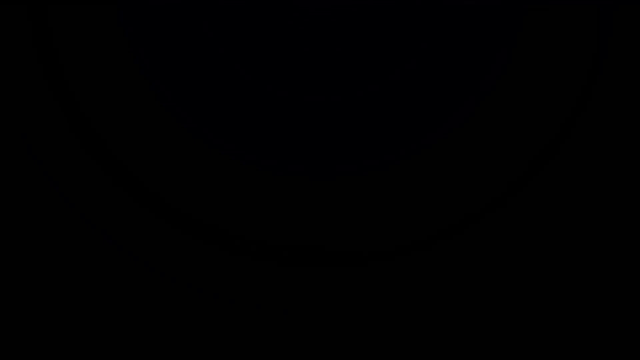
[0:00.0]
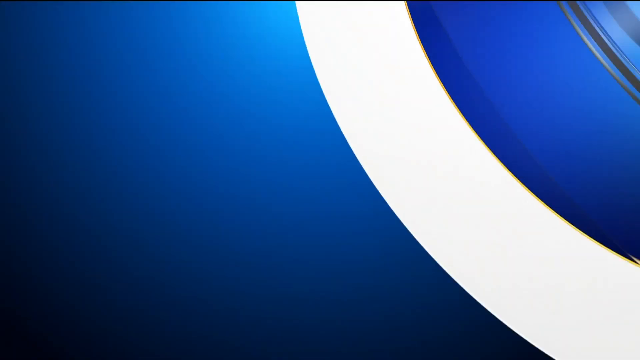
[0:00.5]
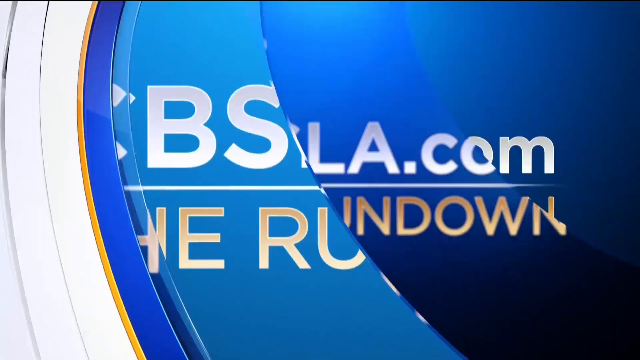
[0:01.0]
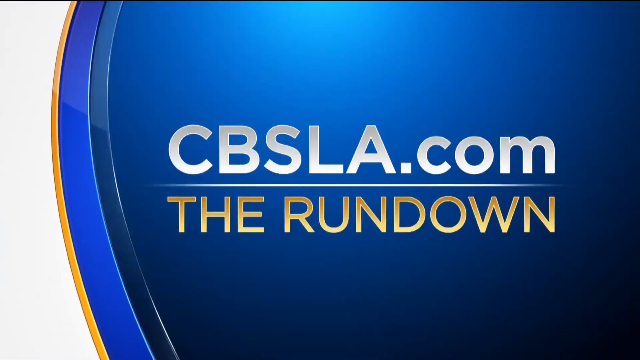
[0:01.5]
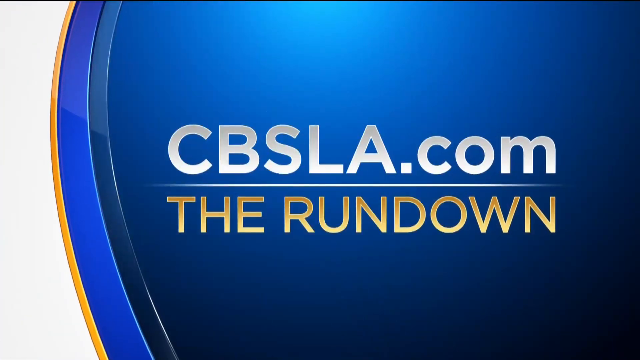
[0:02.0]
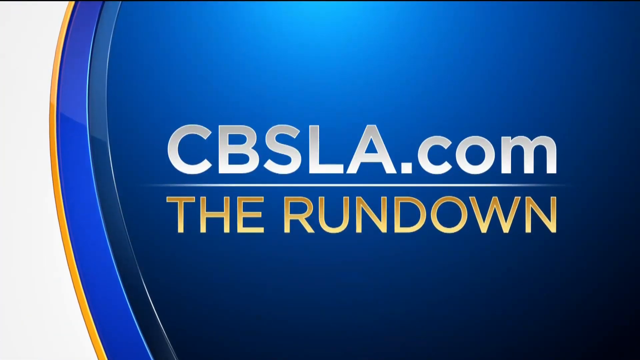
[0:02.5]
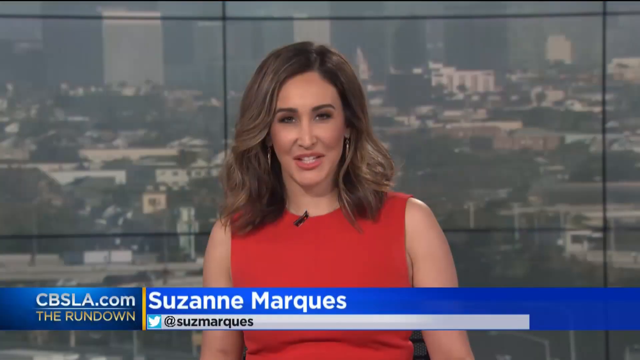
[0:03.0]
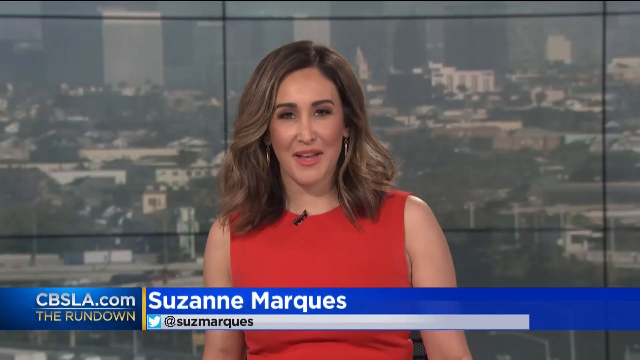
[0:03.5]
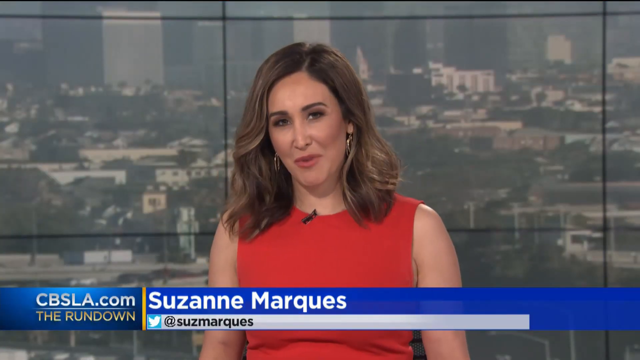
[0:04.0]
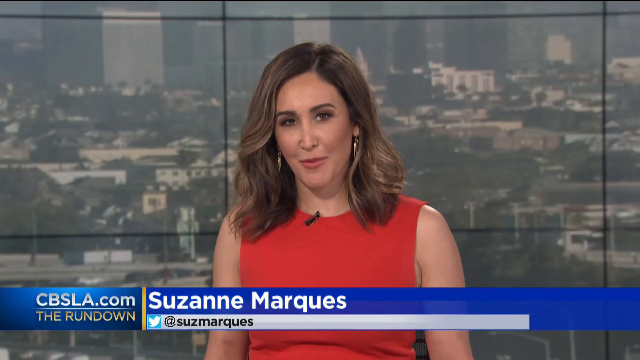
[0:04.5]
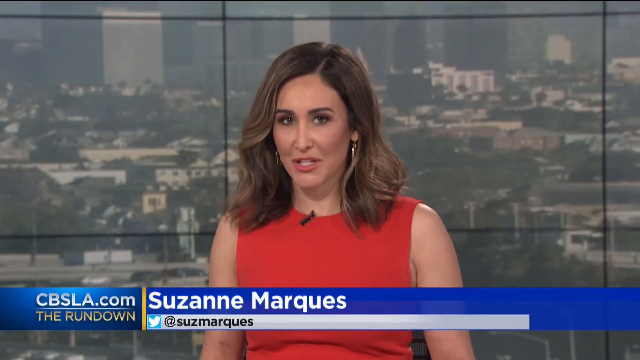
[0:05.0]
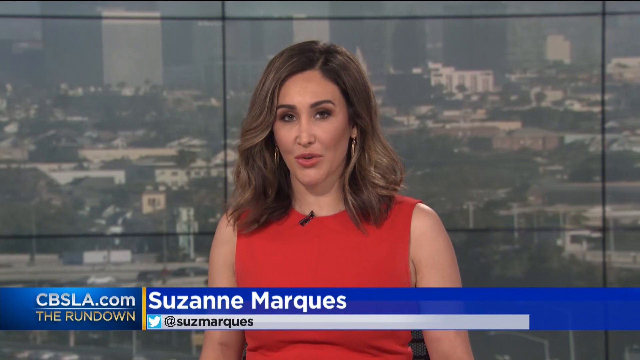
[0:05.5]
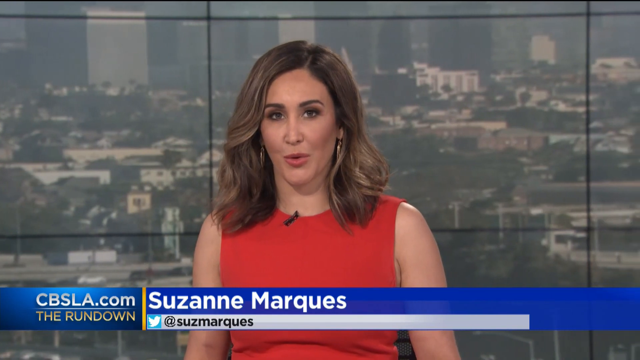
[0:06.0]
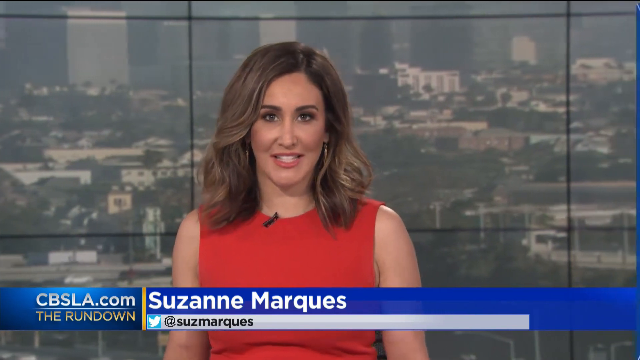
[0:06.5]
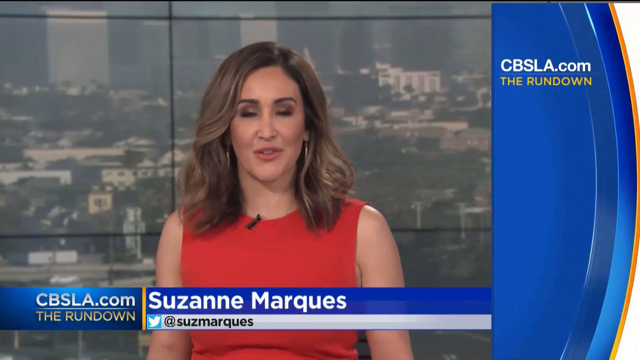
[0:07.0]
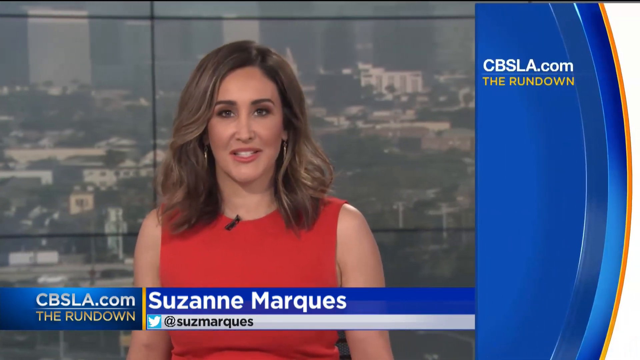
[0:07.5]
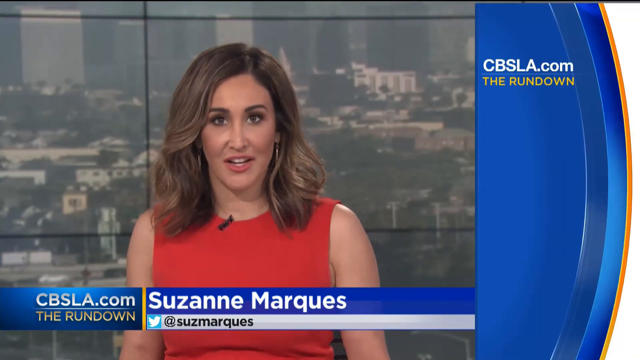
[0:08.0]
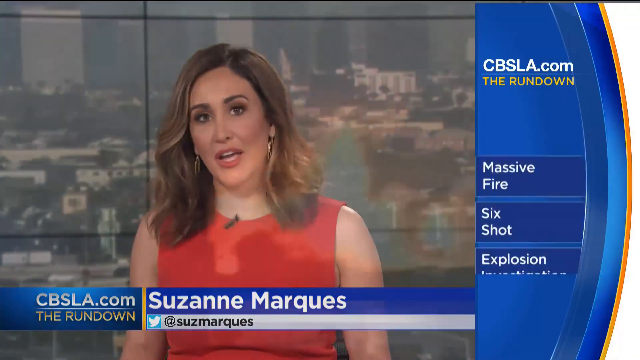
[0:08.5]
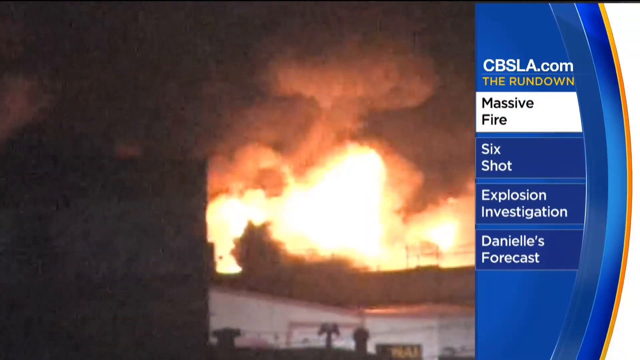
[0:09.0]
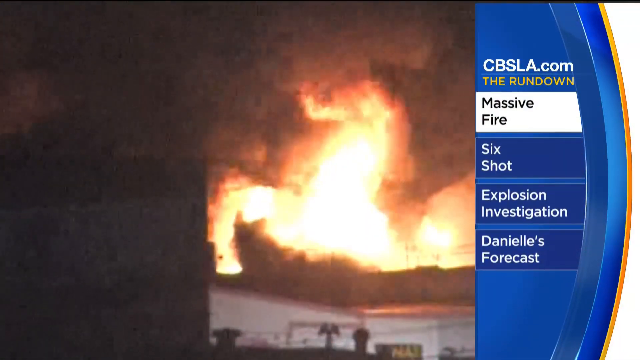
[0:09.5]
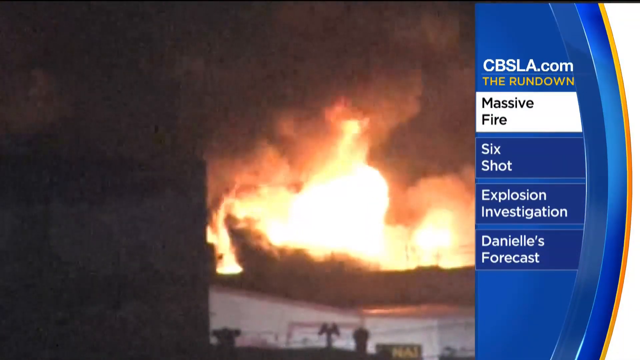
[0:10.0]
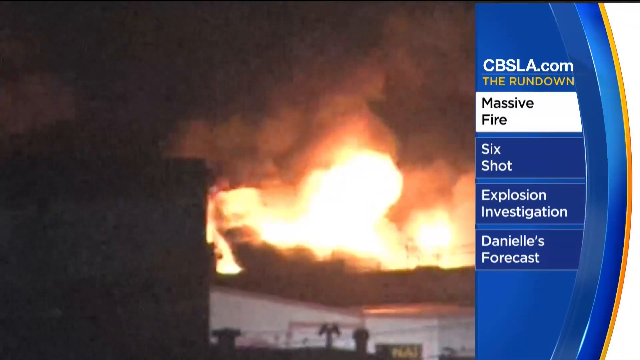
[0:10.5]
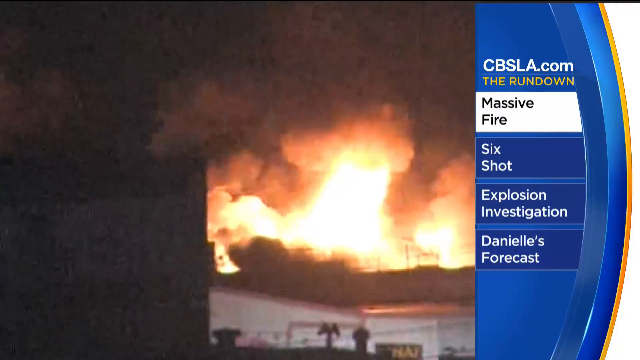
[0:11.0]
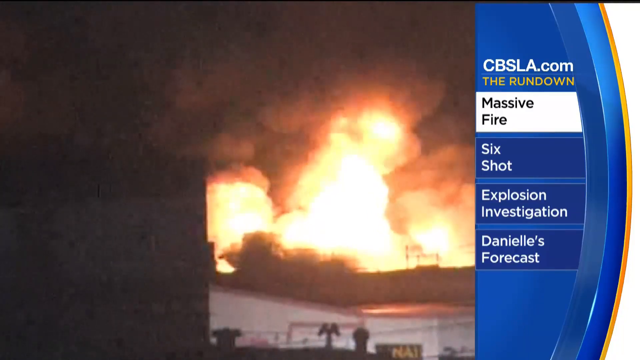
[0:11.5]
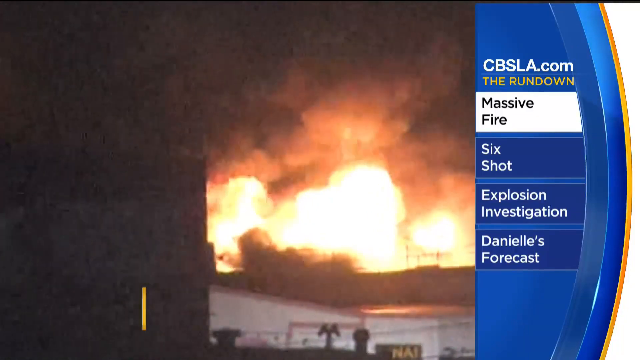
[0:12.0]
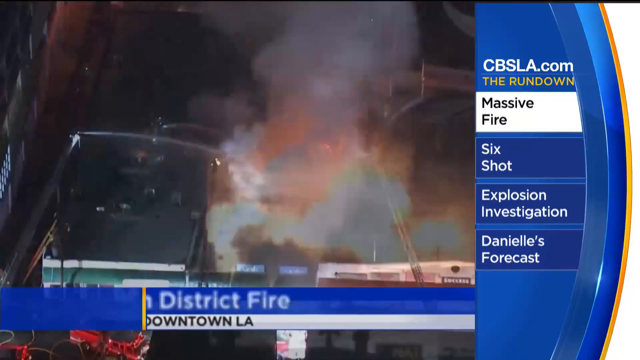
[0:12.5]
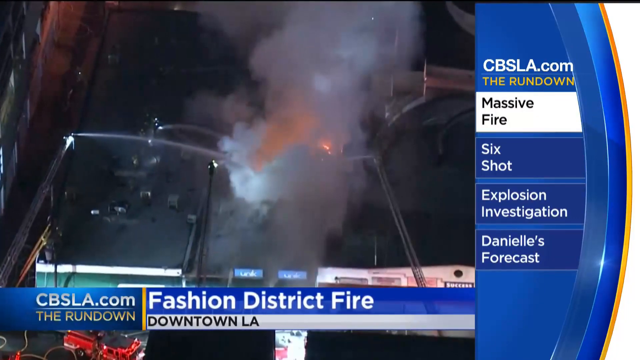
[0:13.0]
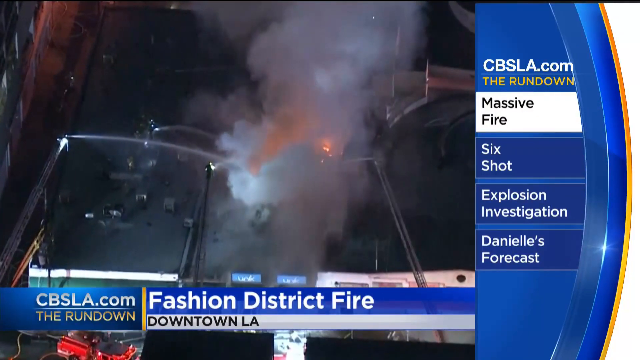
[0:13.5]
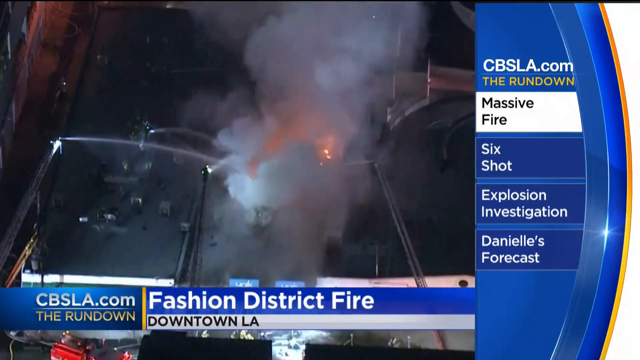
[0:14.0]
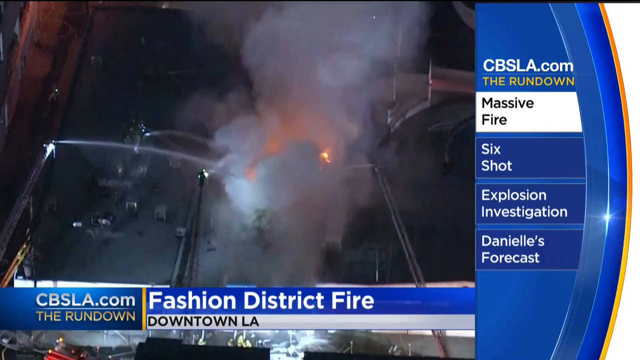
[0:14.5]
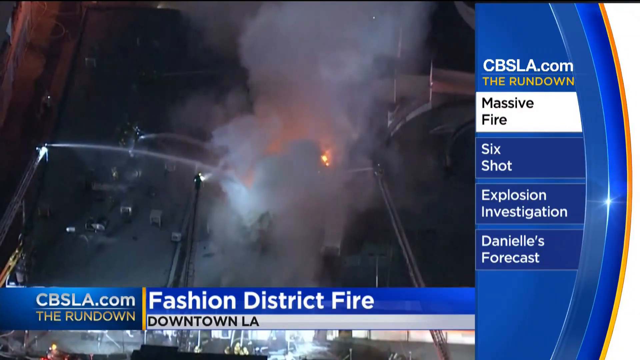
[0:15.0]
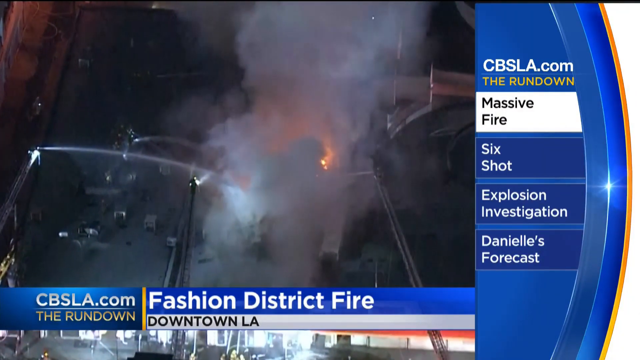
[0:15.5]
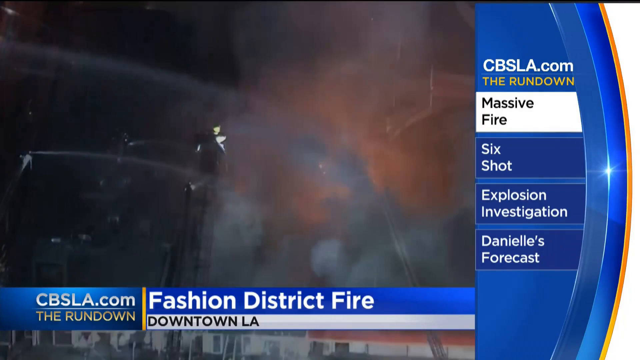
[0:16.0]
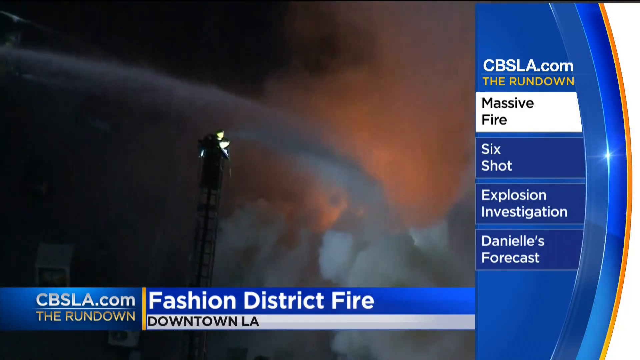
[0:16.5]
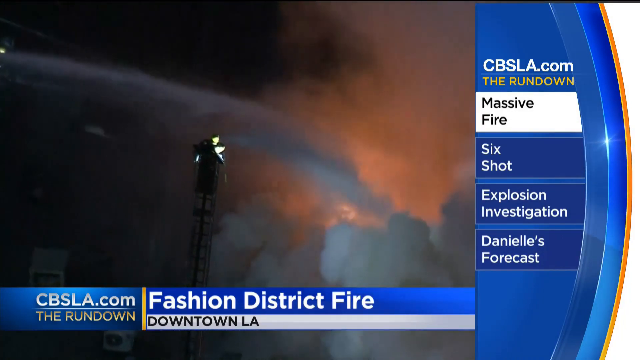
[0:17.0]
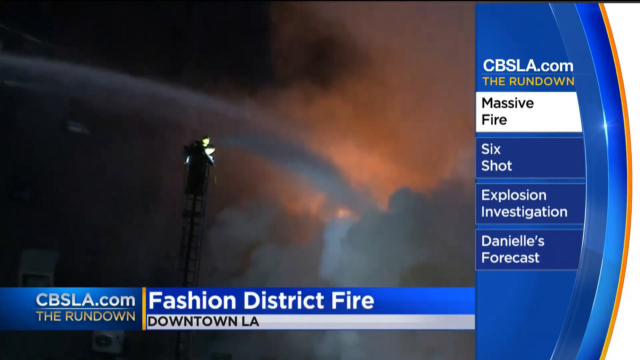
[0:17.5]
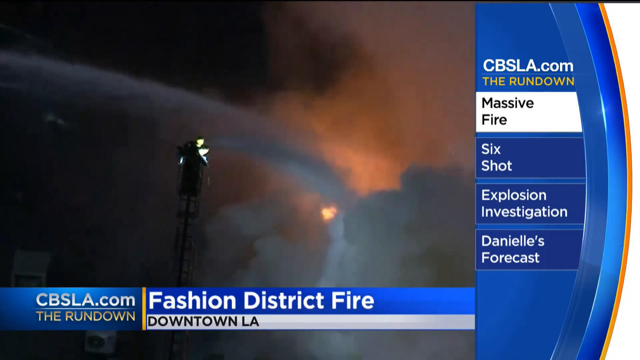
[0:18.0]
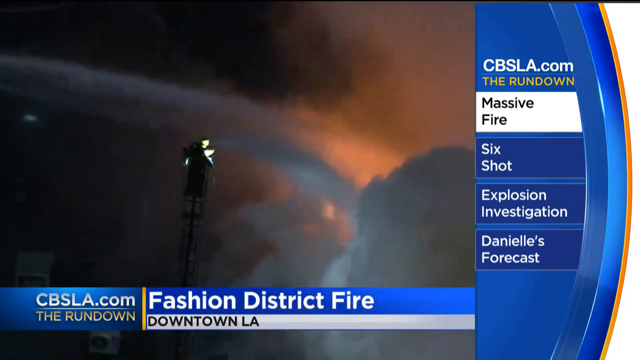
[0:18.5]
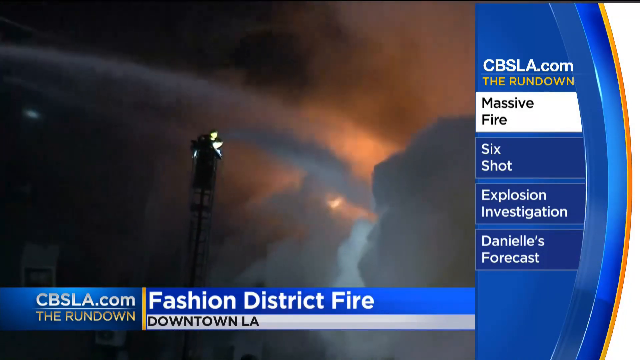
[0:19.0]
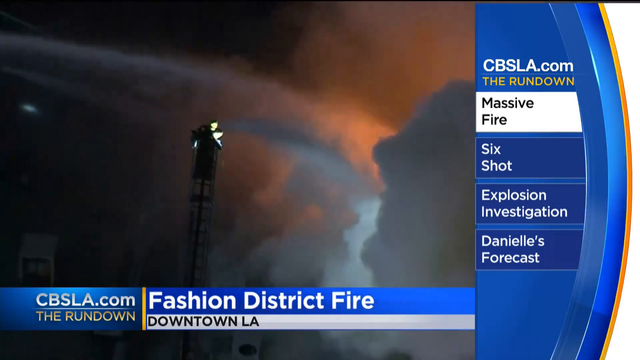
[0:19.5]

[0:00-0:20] A woman newsreader presents "The Rundown" show. The rundown lists a massive fire, six shot, an explosion investigation and Danielle's forecast. A fashion district fire downtown in LA follows, where there appears to be fire and what seems to be a fire extinguisher putting it out. It seems to be a massive fire, and it seems to be getting nearer to the city as city lights are shown. Dustbins are shown, and plastics are shown around it.